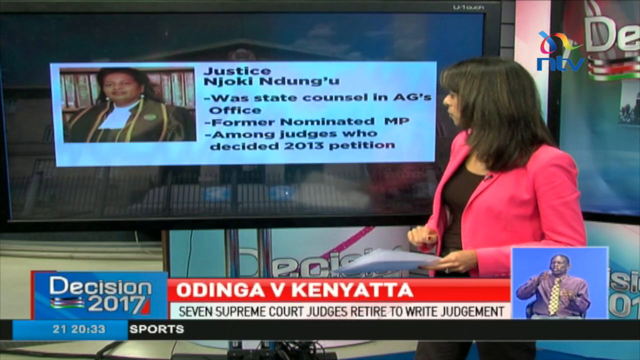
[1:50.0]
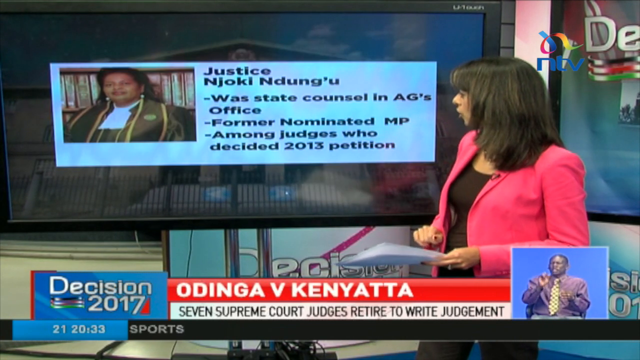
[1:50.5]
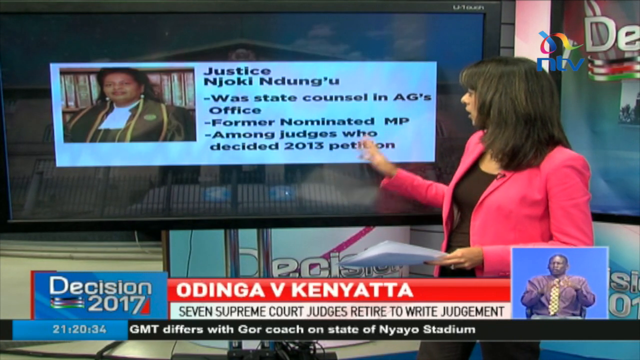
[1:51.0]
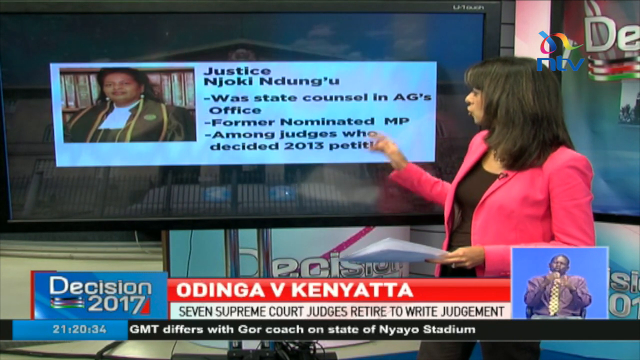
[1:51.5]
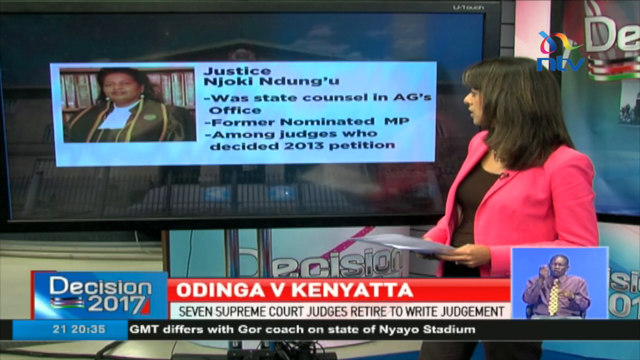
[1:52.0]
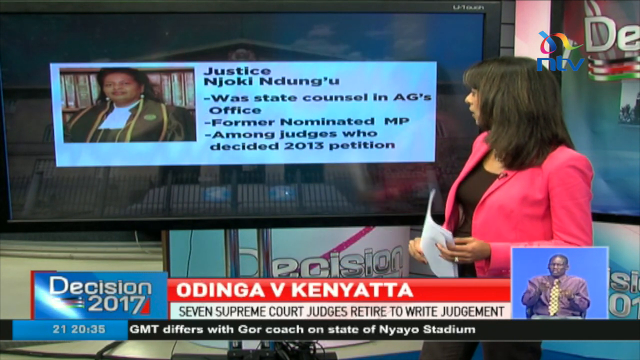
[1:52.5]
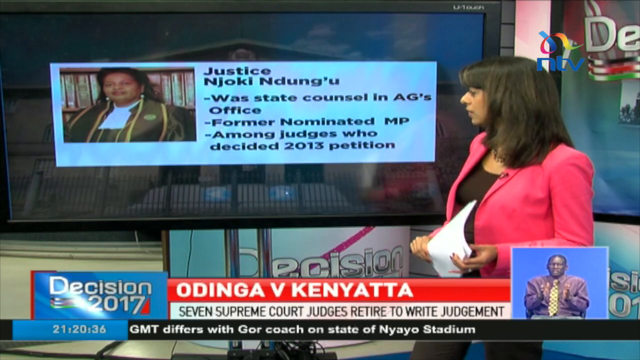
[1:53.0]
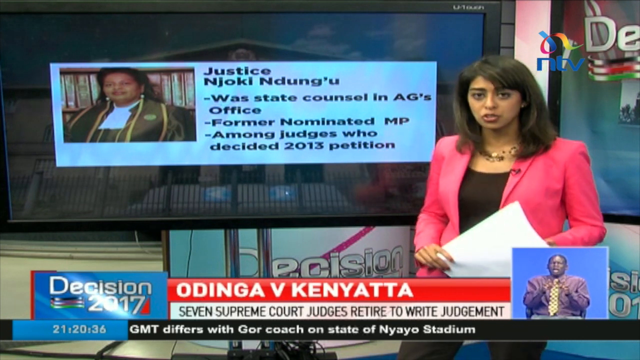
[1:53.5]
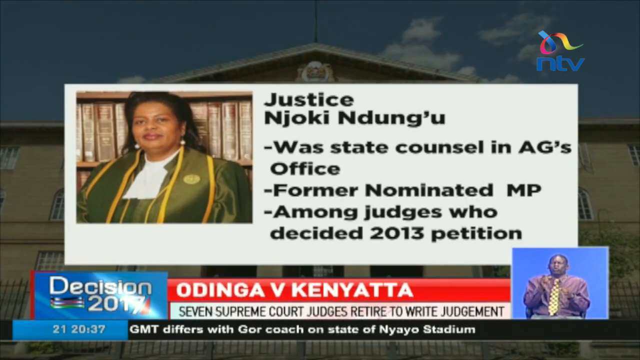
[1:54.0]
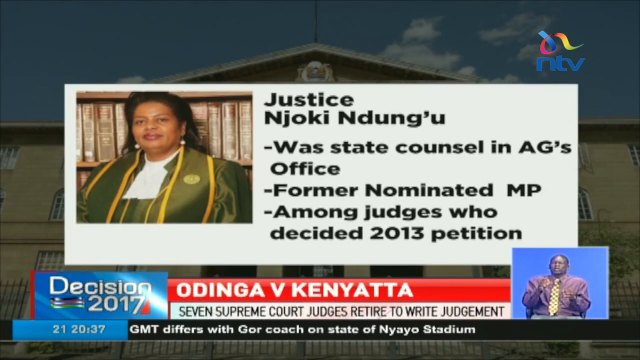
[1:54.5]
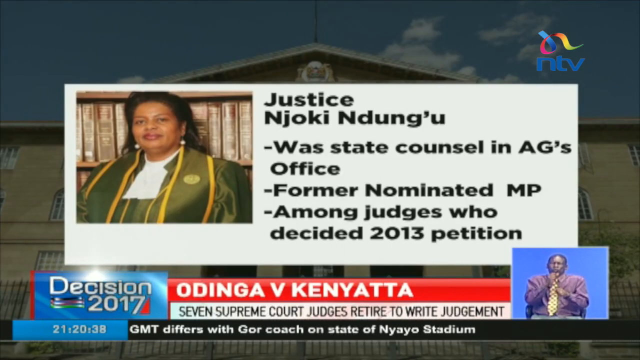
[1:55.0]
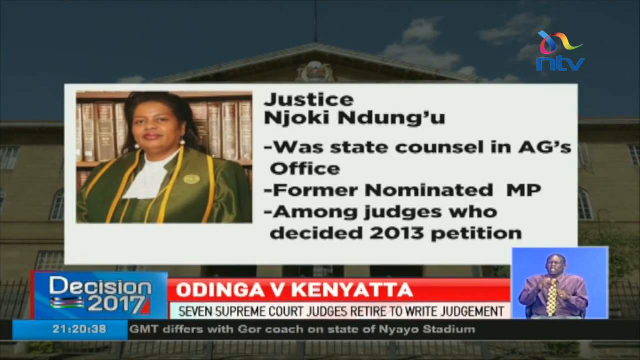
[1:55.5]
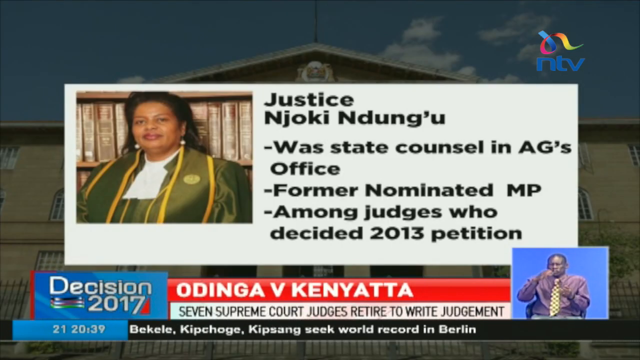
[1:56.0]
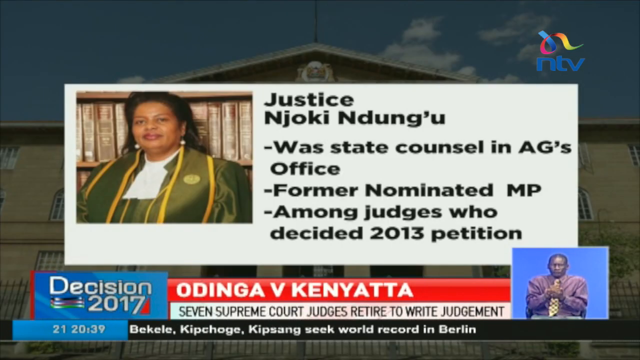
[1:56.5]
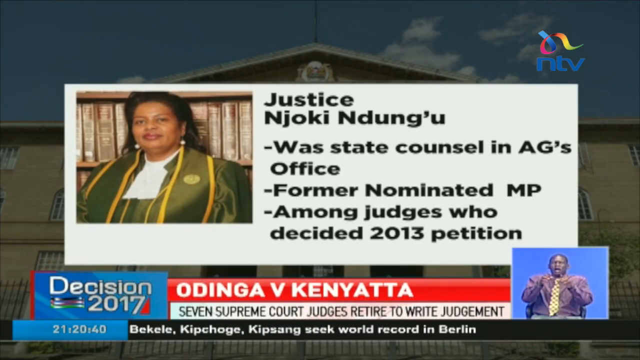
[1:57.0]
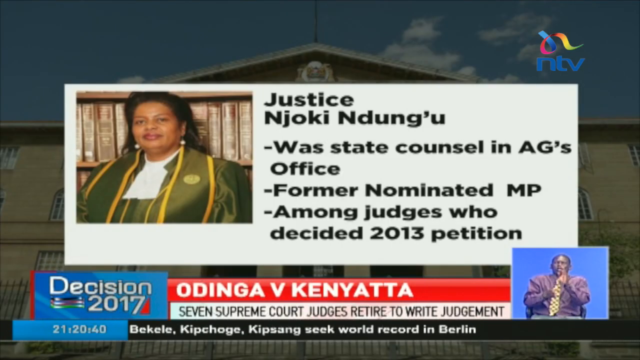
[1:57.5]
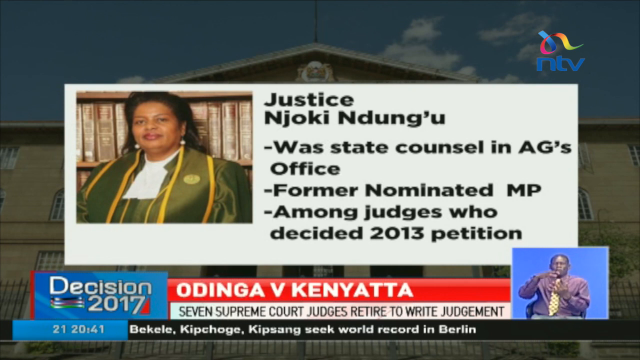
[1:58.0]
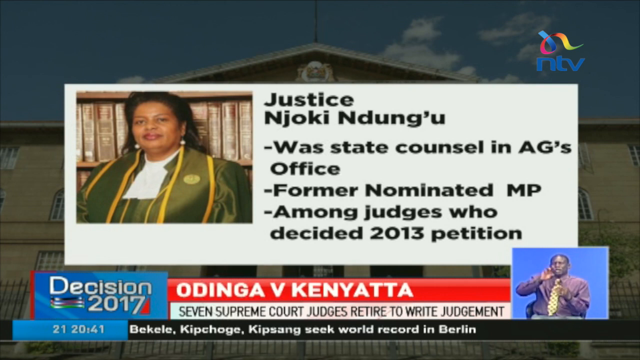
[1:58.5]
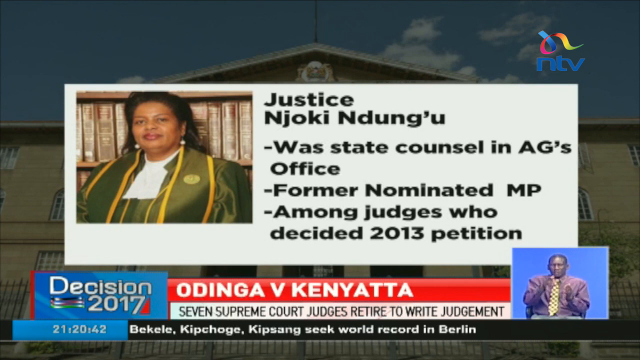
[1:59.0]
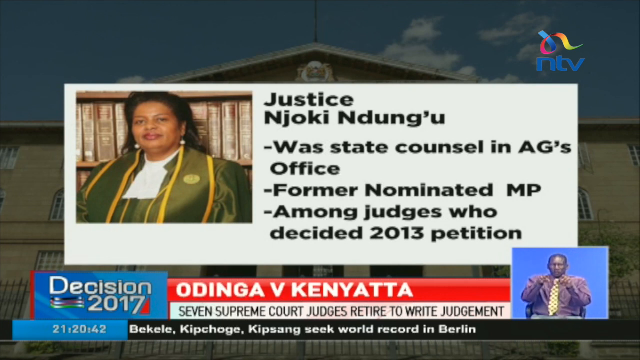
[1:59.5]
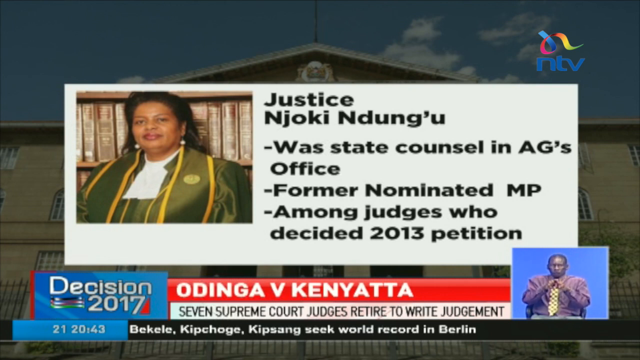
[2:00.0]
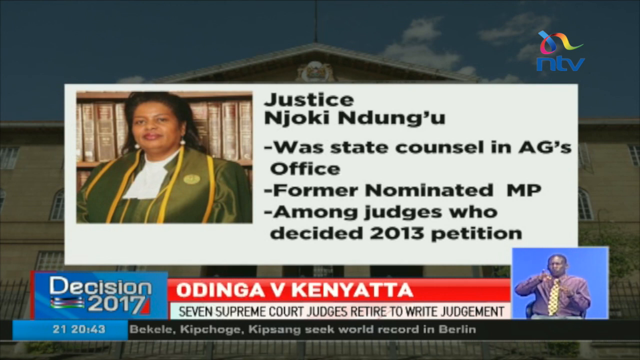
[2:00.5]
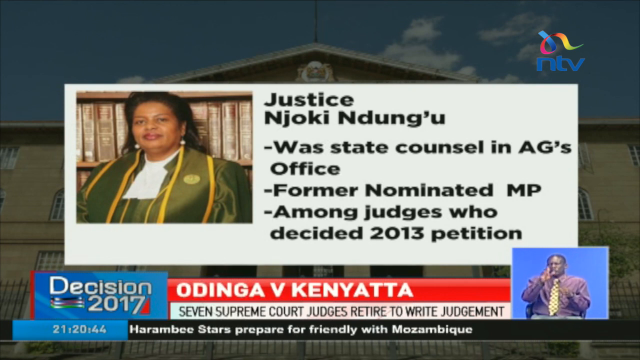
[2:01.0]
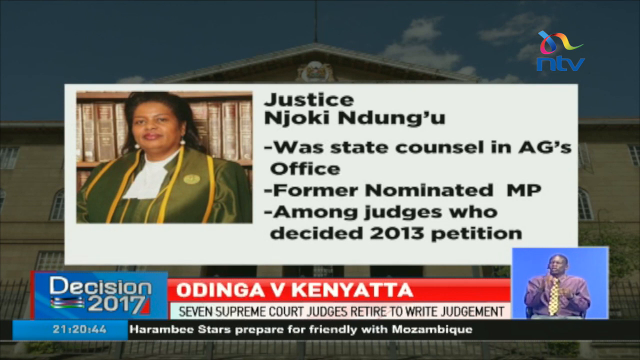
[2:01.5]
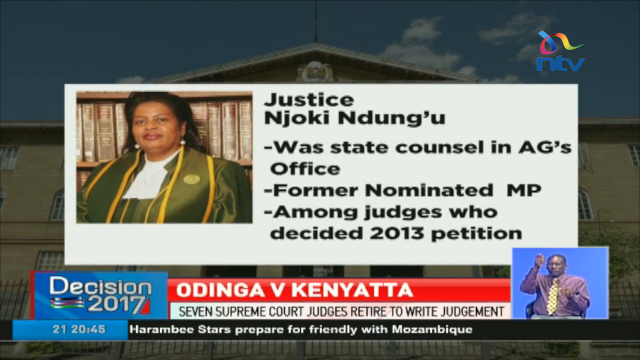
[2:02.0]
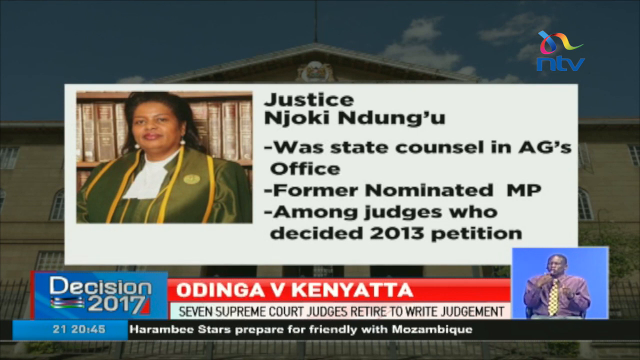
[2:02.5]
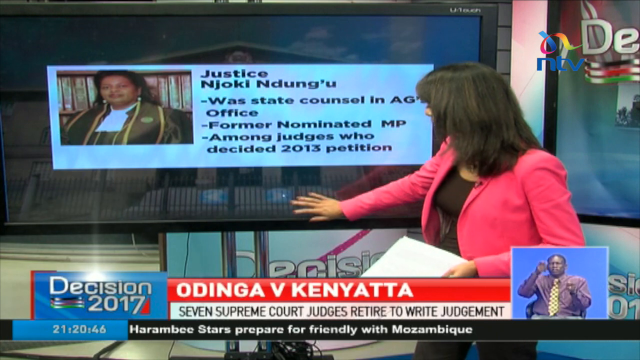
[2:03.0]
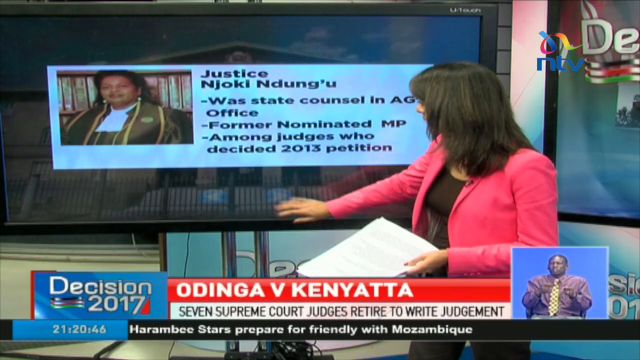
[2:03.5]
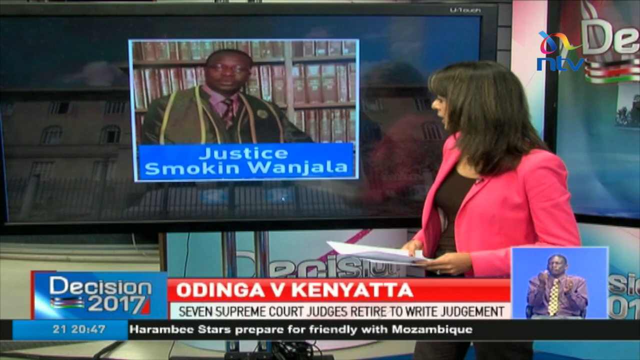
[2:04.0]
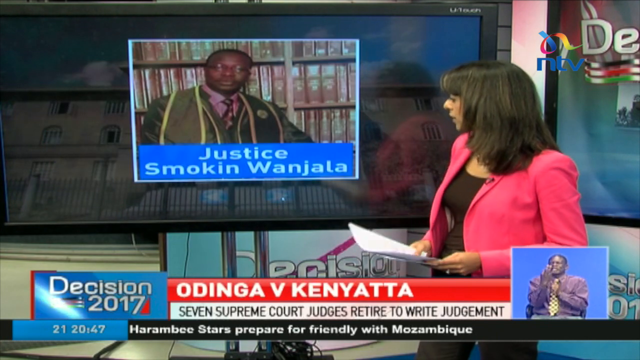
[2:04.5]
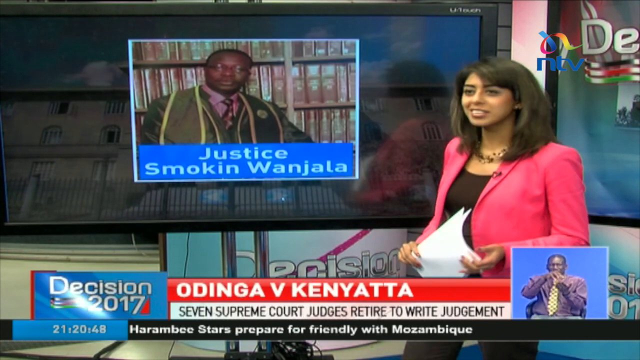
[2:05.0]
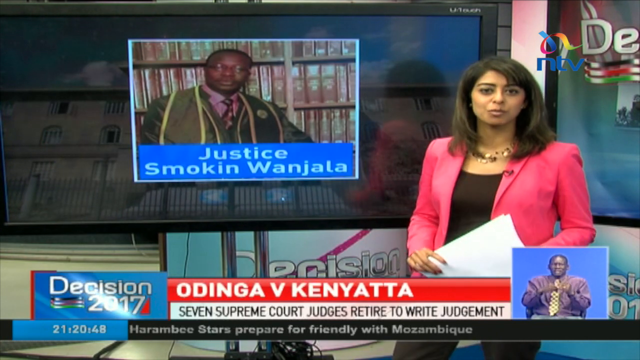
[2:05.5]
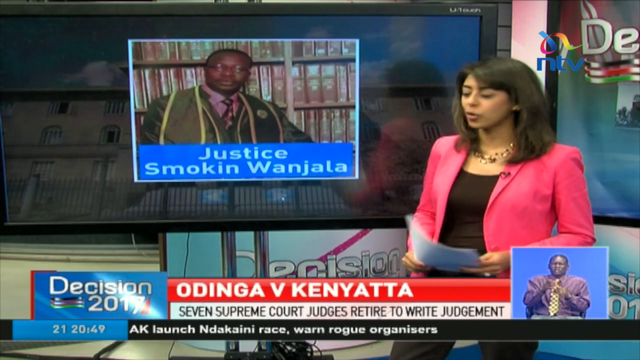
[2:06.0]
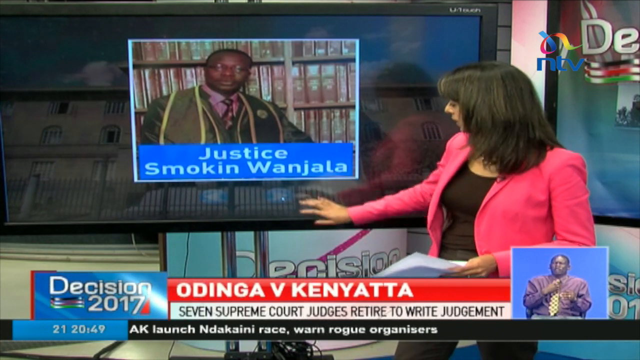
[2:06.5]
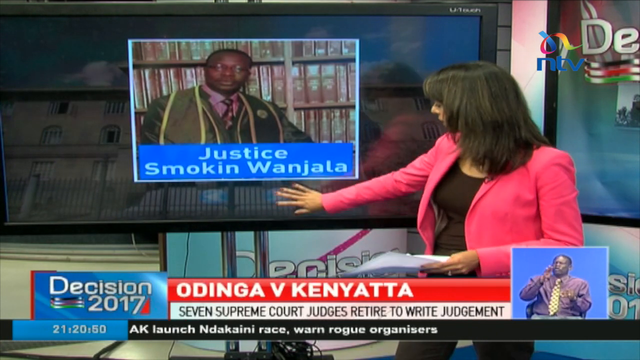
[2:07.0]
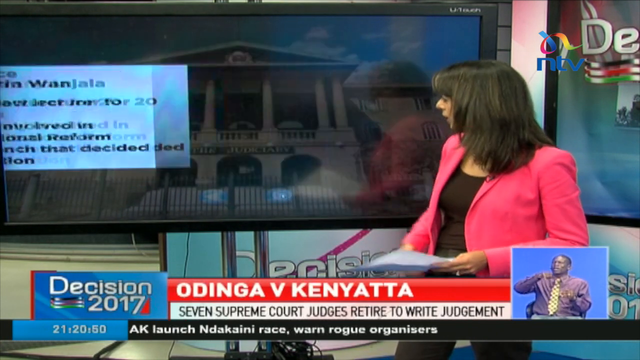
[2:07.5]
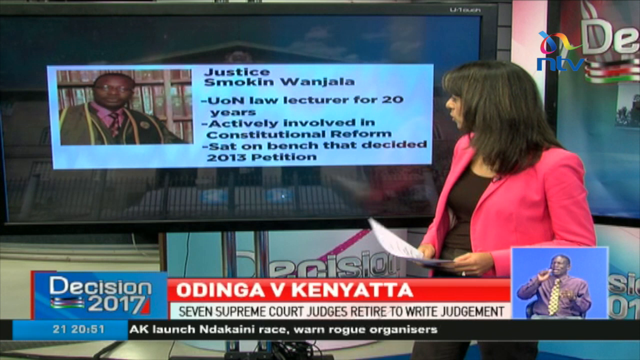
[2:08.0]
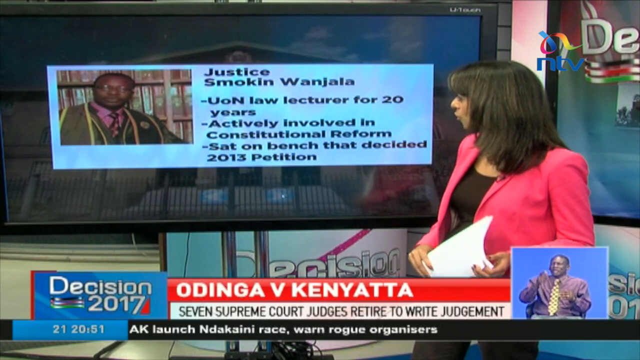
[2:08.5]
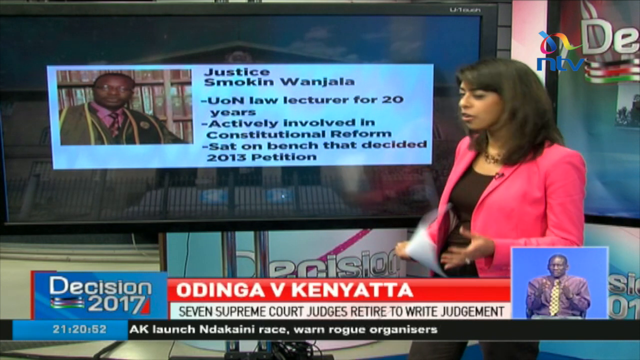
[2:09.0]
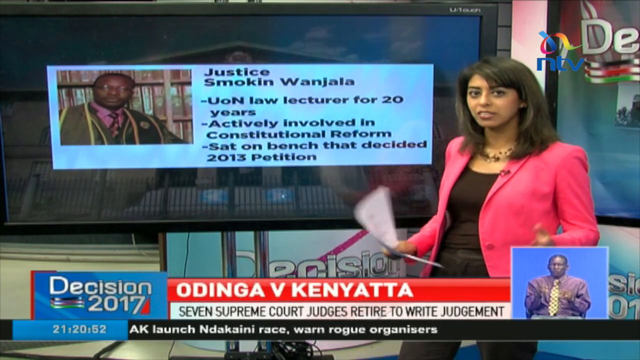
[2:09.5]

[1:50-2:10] The female news reporter stands to the right side of a very large, wide screen with a black background. In the middle is a long white rectangular box; on its left is a picture of what looks like an African woman judge in a black robe with a black sash with yellow trim on both sides around her neck. To the right of the picture it says "Justice Njoki Ndung'u," with three bullet points underneath: "Was state counsel in AG's office," "Former nominated MP," and "Among judges who decided 2013 petition." The reporter is kind of looking at the screen as she reads the content, then turns back to face the camera. The white box with the judge's image and bullet points is then kind of blown up larger on the screen, overlaying a background that looks like some kind of large white courthouse building. The scene goes back to the reporter in front of the large screen, where she presses the forward play button, and another judge's picture comes up: an African man with short hair and glasses, wearing a black robe with the black and yellow sash. Underneath it says "Justice Smokin Wanjala." The reporter is kind of facing the screen, reading or introducing this judge, then turns back to the camera, holding a few pieces of white paper. She presses the forward play button again, and the white rectangular box appears with the judge's image on the left, his name "Justice Smokin Wanjala" on the right, and a three-bullet list underneath: "UoN law lecturer for 20 years," "Actively involved in constitutional reform," and "Sat on bench that decided 2013 petition." The reporter kind of looks at the screen, reading the content, then turns back to the camera, and as she speaks she kind of lifts the paper in her hands in front of her.